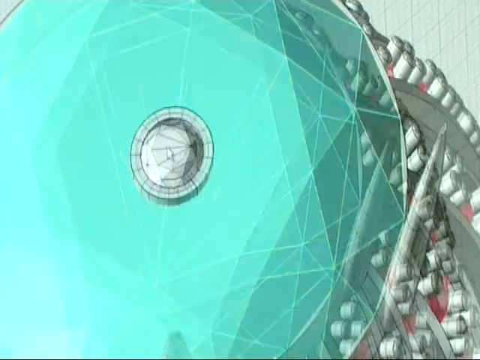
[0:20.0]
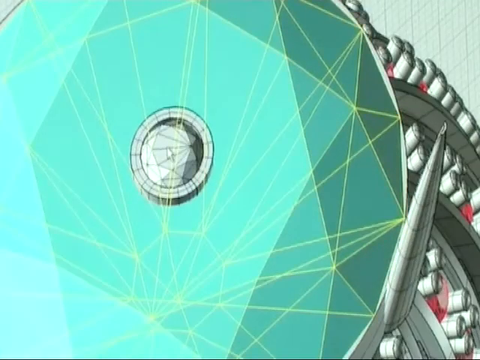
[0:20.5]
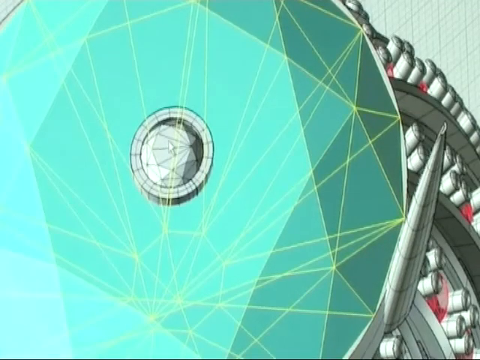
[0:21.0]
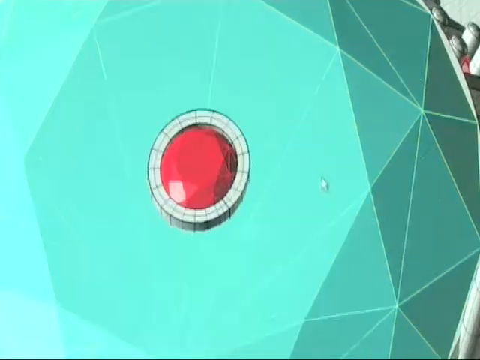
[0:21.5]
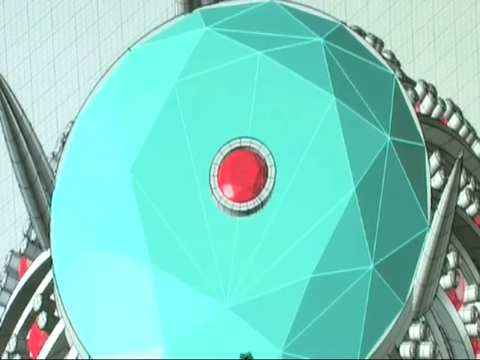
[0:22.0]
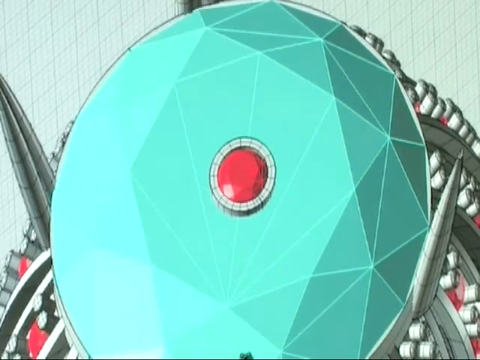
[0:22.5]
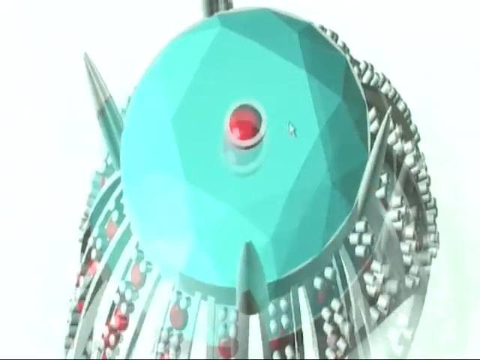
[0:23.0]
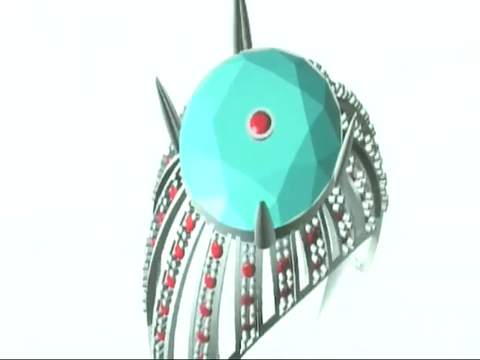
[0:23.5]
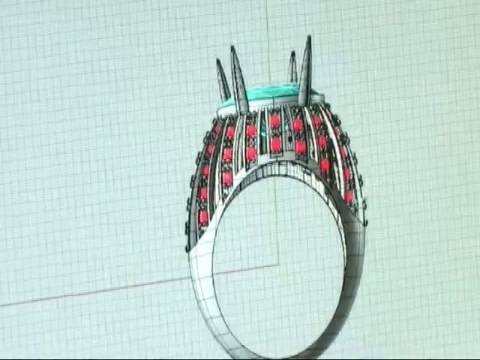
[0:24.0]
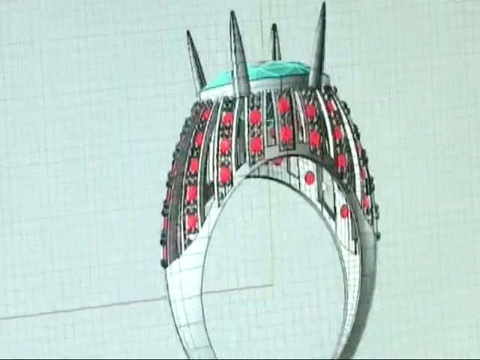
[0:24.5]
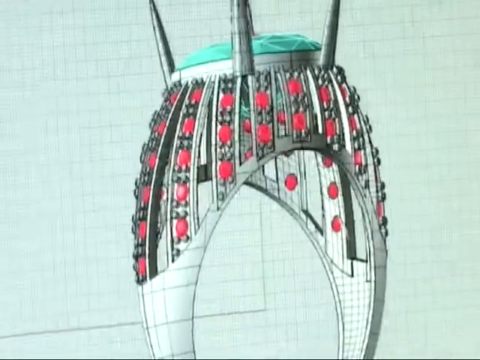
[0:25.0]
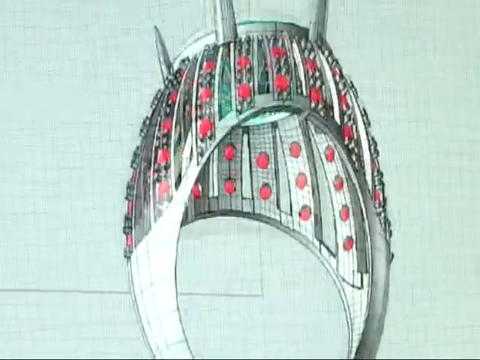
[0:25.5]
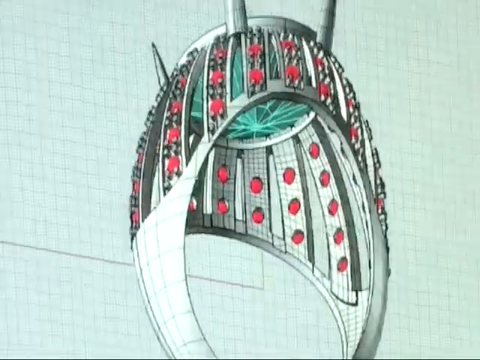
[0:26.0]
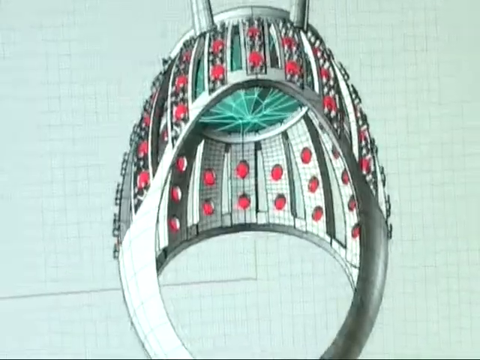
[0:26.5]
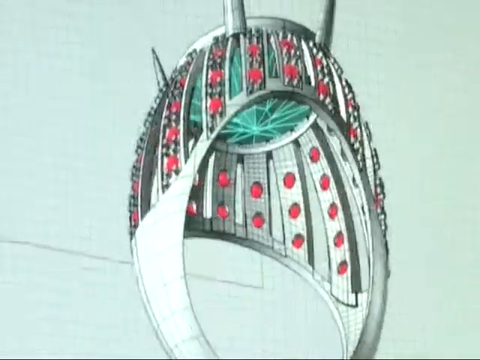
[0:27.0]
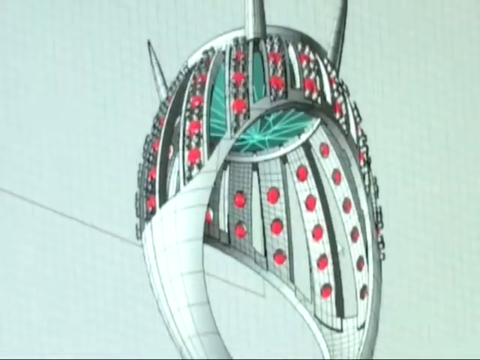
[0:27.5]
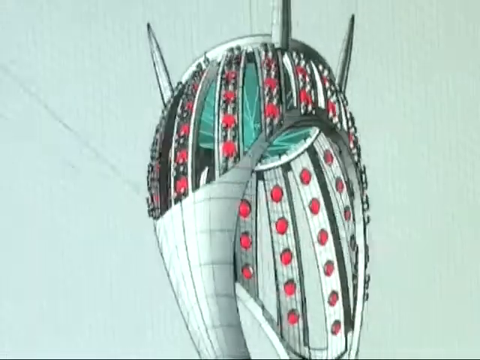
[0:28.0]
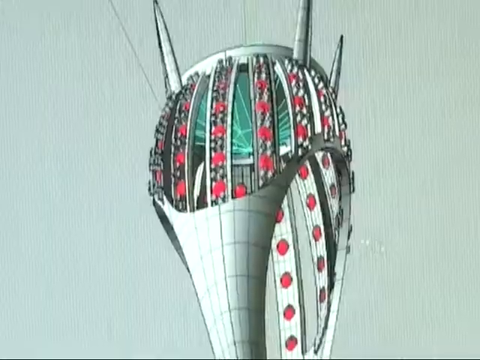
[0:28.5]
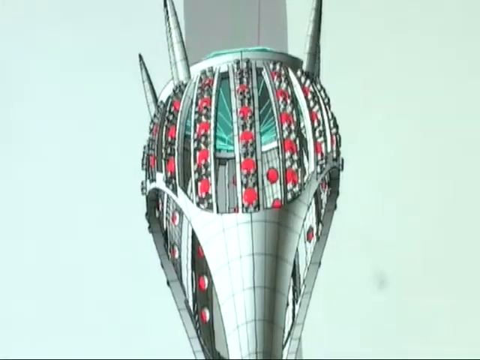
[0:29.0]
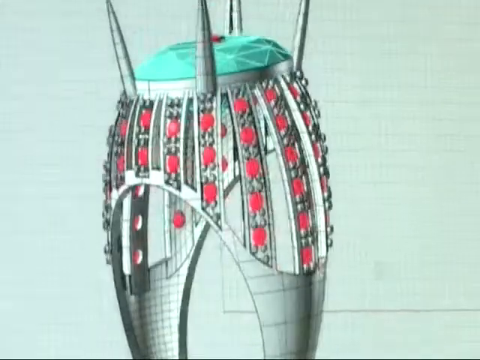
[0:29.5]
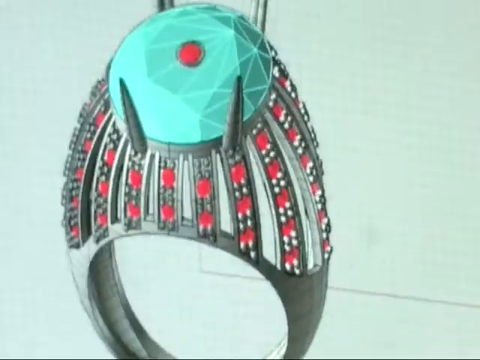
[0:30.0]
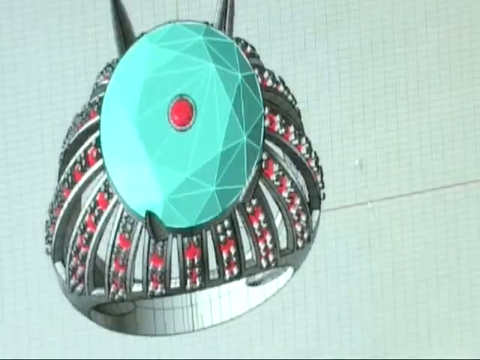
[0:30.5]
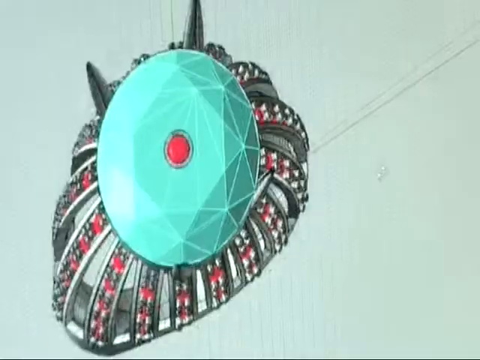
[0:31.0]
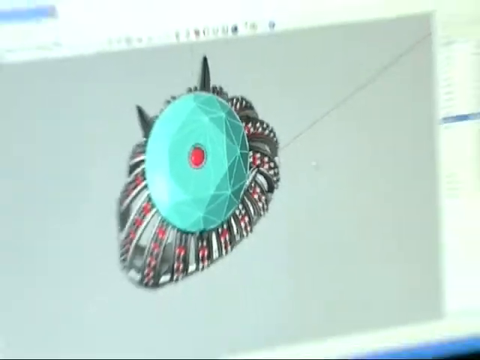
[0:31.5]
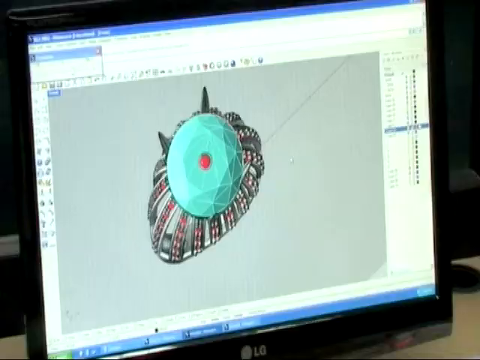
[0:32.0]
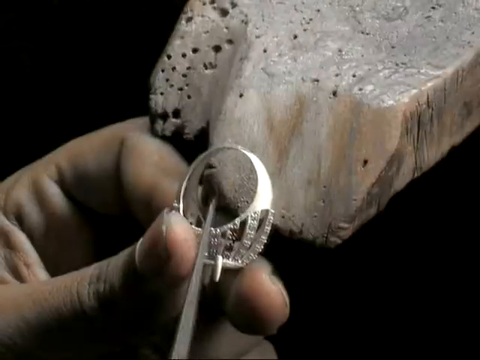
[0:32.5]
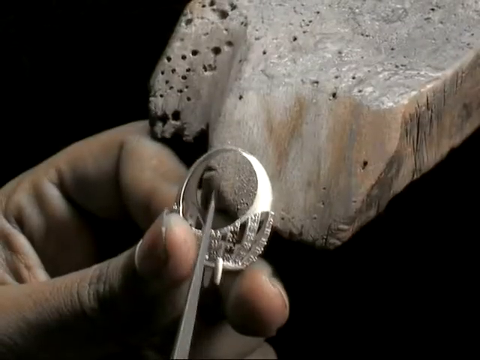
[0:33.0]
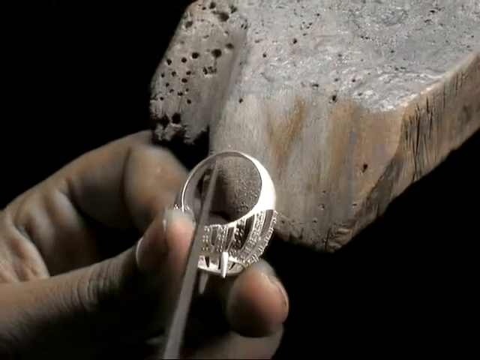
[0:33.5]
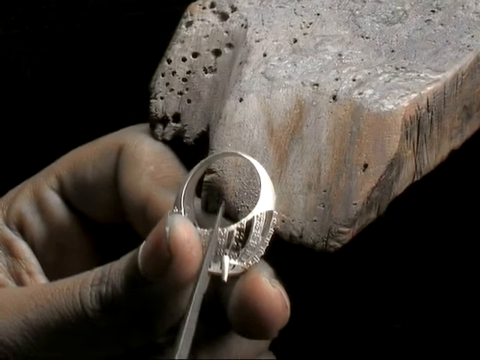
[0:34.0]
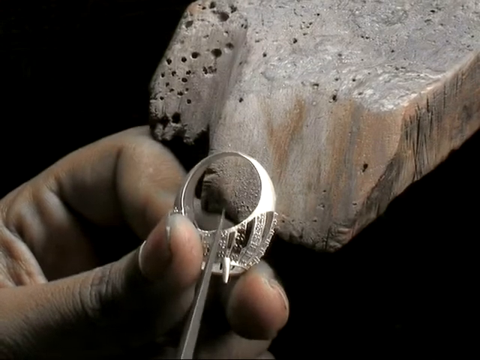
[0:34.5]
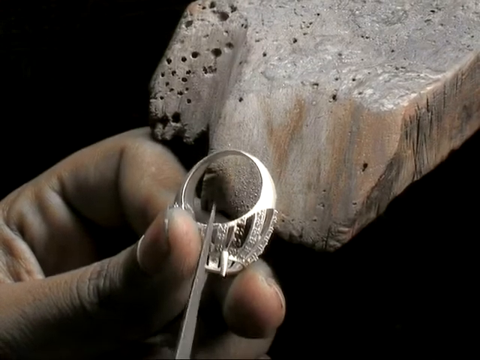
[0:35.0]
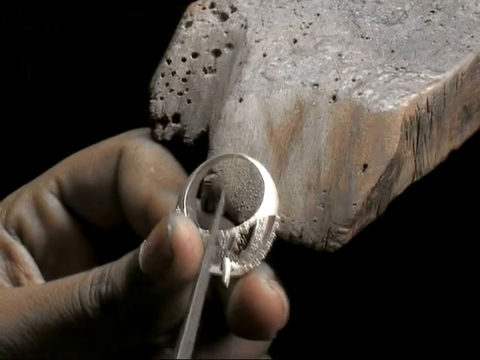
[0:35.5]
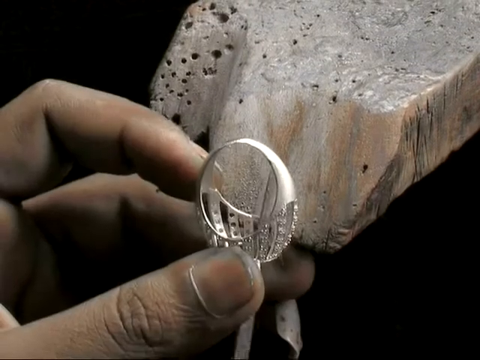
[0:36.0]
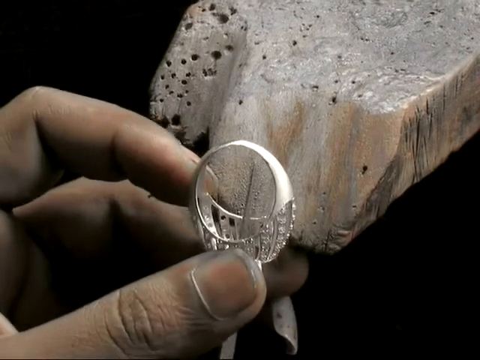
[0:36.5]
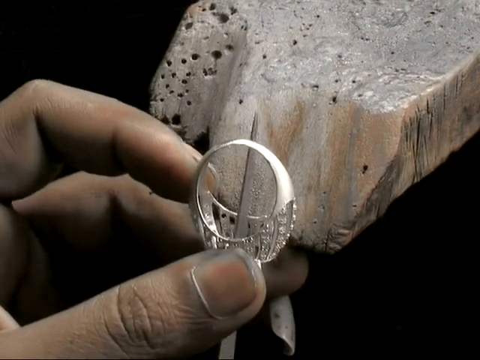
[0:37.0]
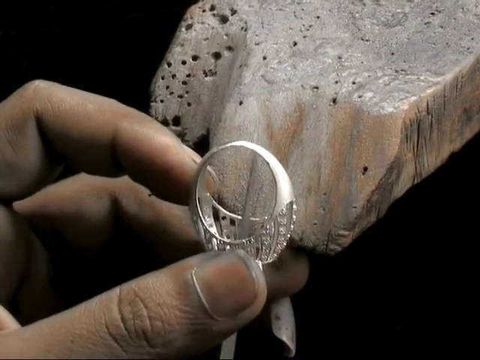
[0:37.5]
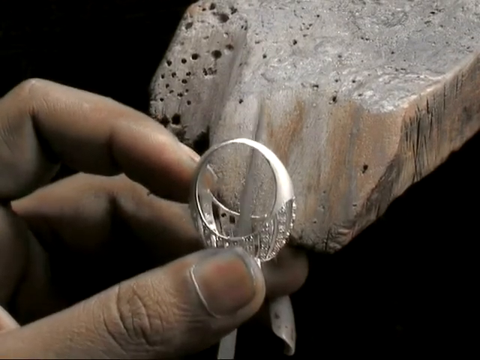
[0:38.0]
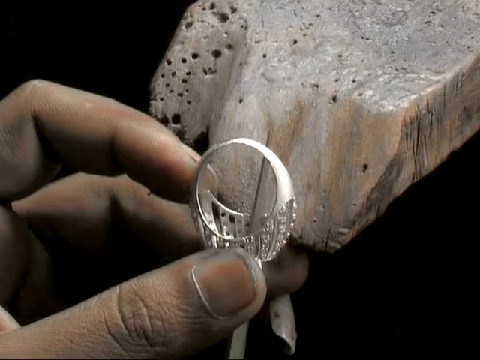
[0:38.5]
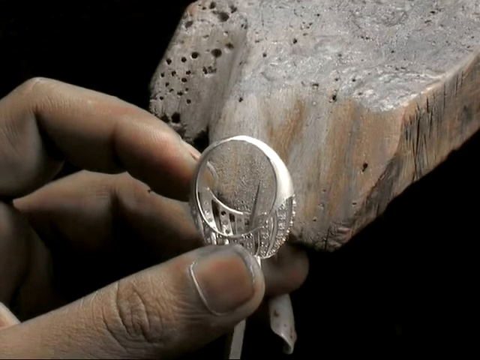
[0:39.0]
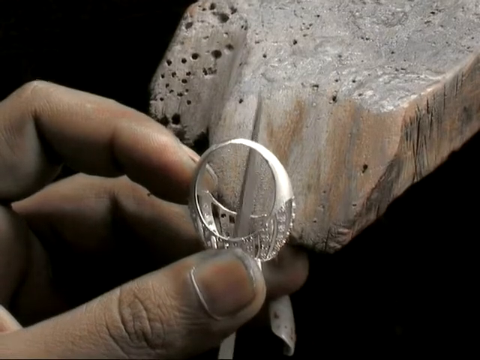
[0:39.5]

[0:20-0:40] A shining ring has a blue-green type of diamond right in the middle, and it looks like it has a fence of silver around the diamond. At the bottom is the name of the ring, "Taurus ring by Glenn Lira." The ring appears very expensive and looks suitable for maybe an engagement or a wedding. The video shows how the ring was designed: the ring is turned to all angles so its structure can be seen. Then the view zooms out and a laptop is visible.